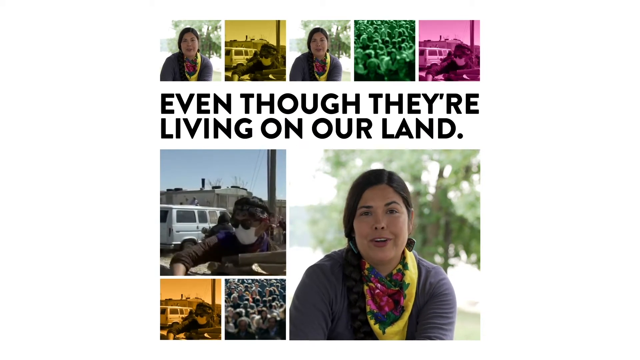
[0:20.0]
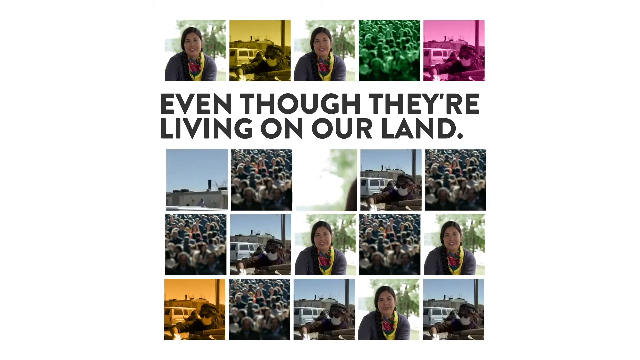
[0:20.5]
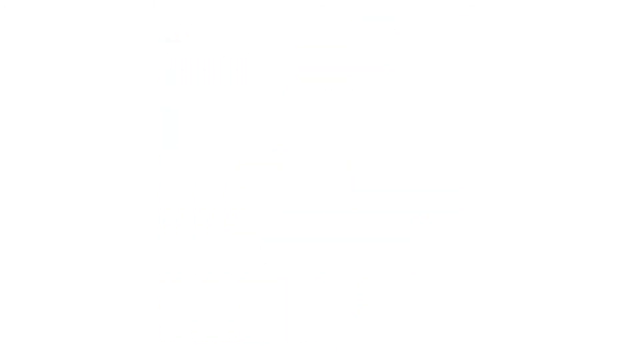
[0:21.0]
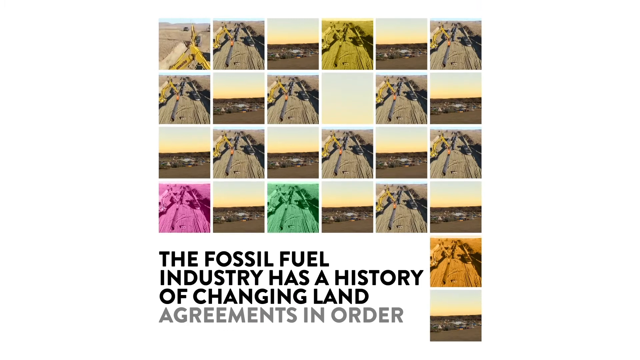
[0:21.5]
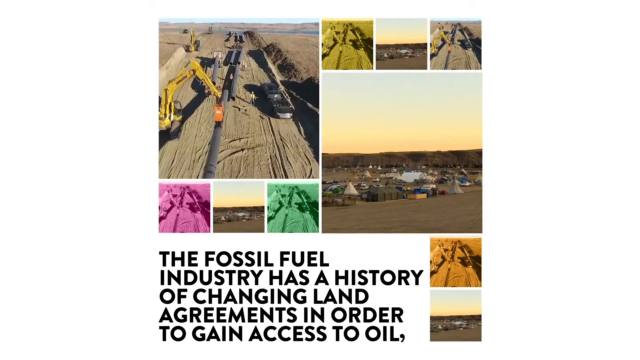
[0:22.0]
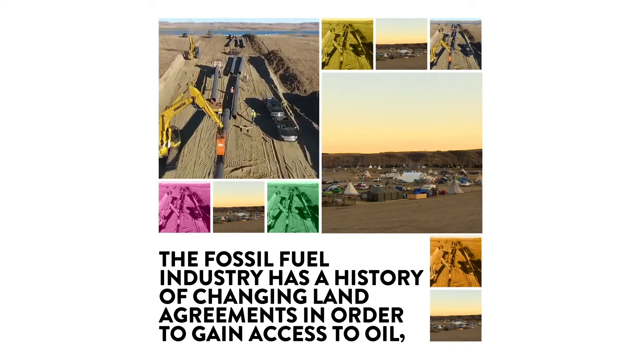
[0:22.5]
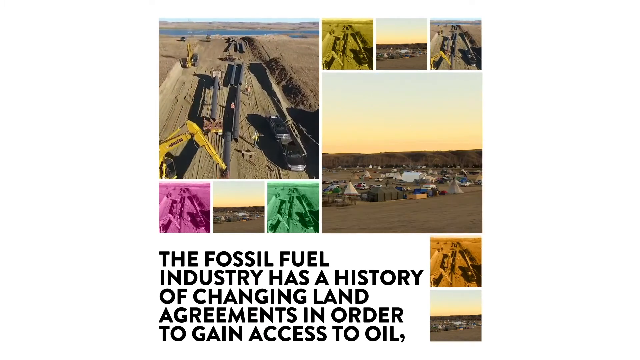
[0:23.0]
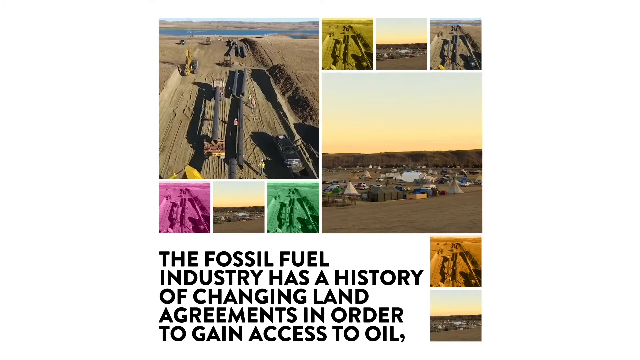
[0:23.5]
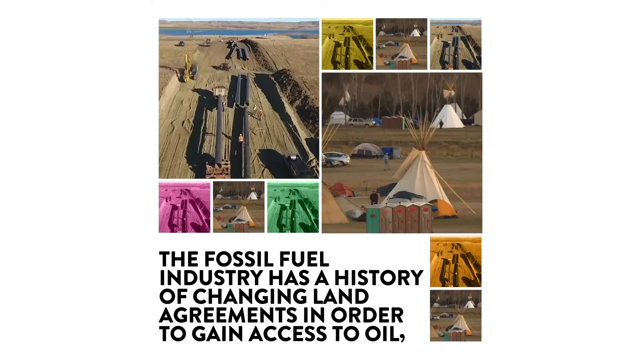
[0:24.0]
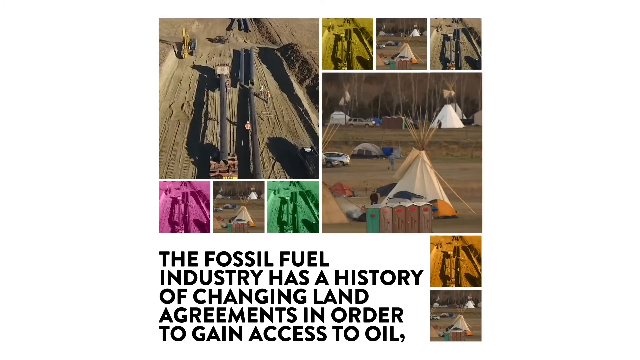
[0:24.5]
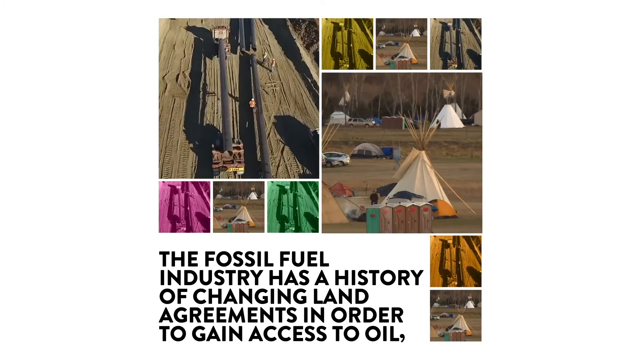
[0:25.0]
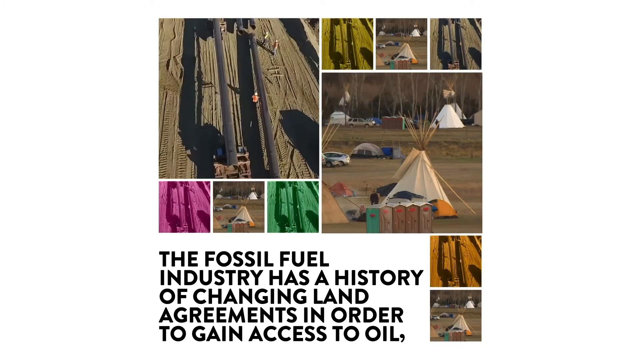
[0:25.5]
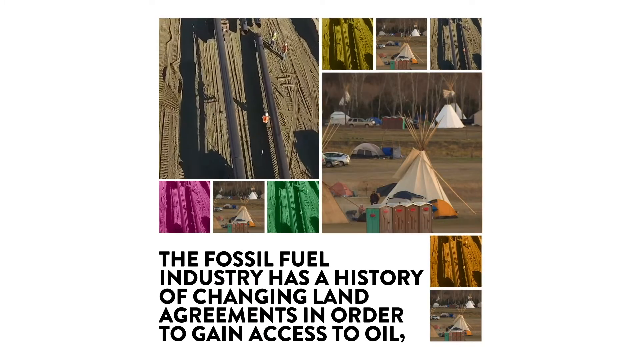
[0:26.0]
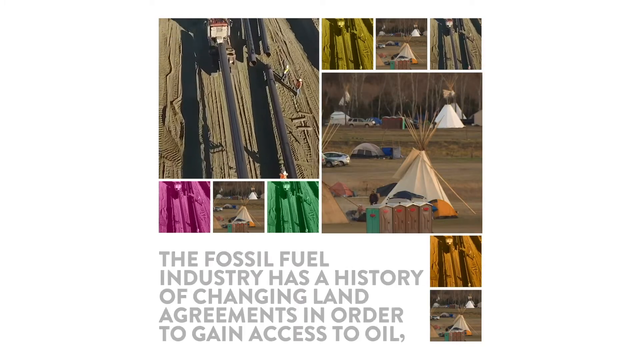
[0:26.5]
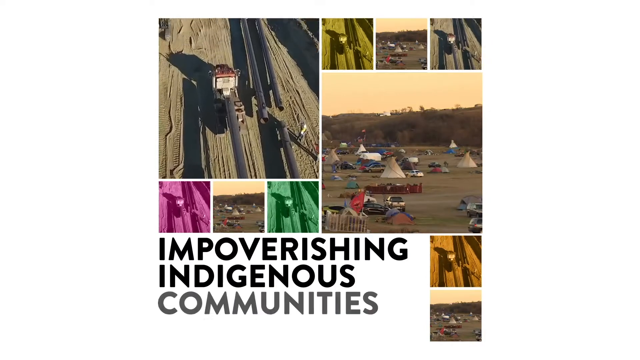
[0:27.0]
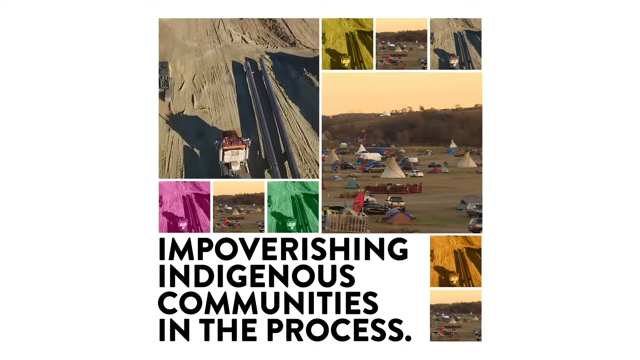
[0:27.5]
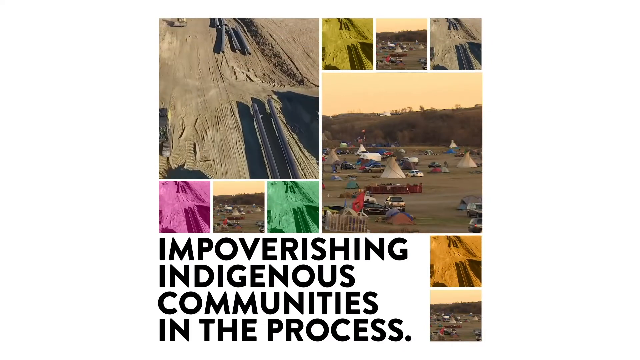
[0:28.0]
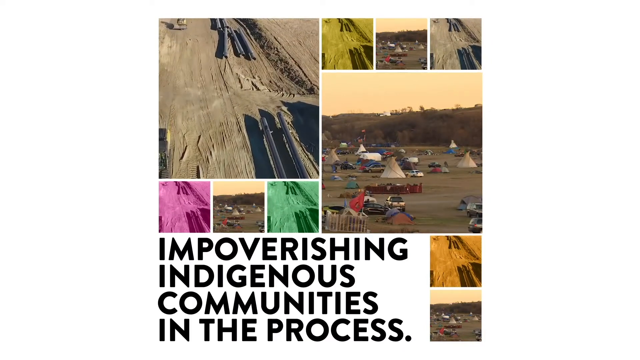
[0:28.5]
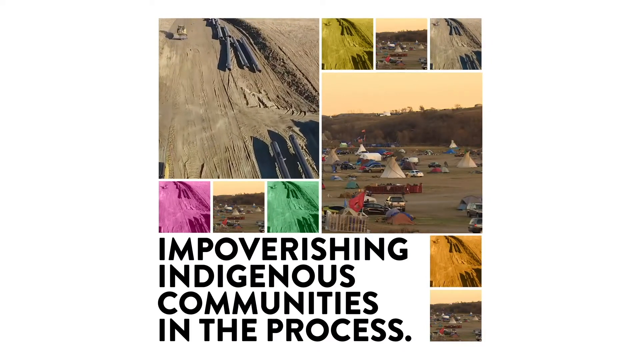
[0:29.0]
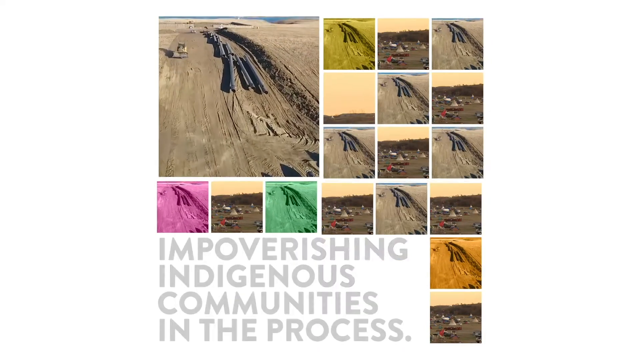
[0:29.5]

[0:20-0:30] Many videos show construction on the land. Workers appear to be drilling or running pipe through it. People are in teepees, and porta-potty outdoor restrooms stand among the teepees. The land appears to be flattened and pipes are being laid, with what looks like a river behind it.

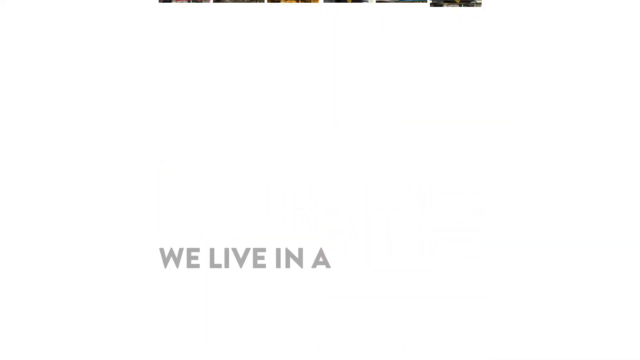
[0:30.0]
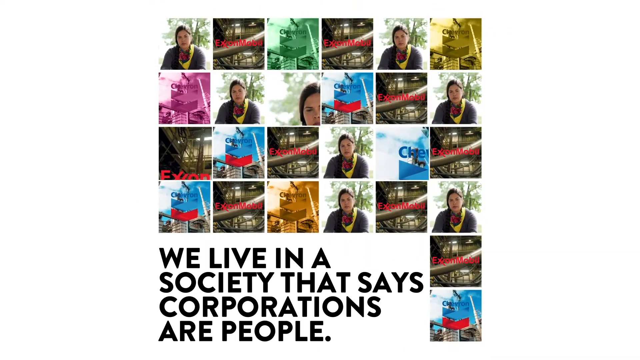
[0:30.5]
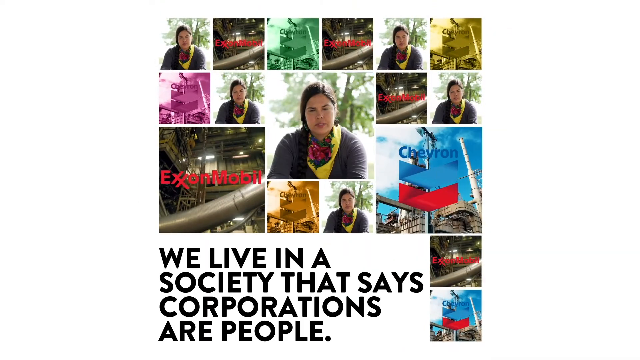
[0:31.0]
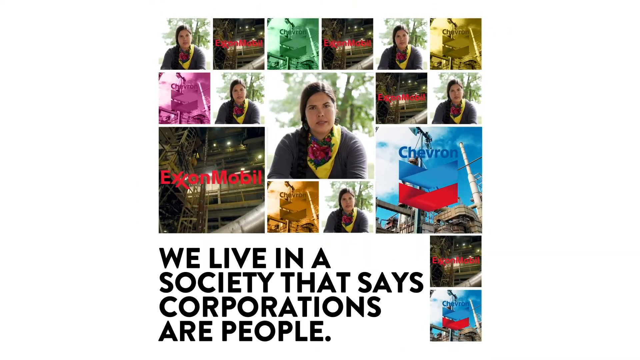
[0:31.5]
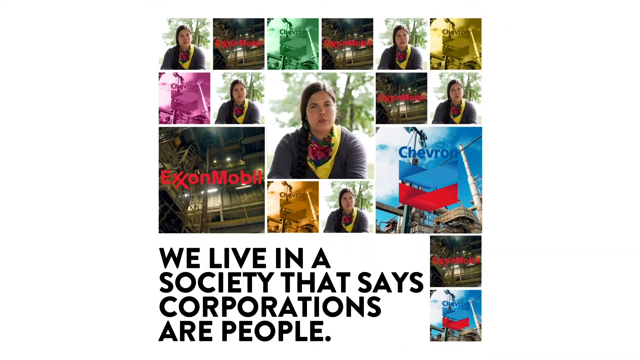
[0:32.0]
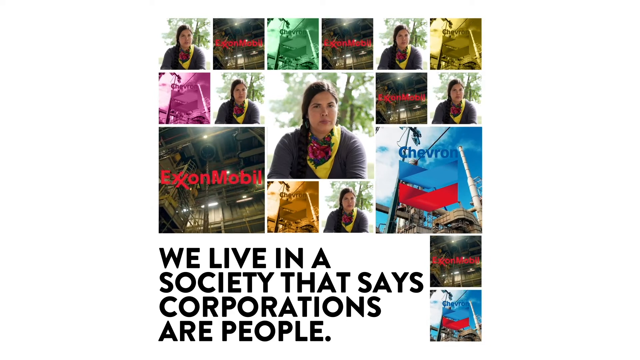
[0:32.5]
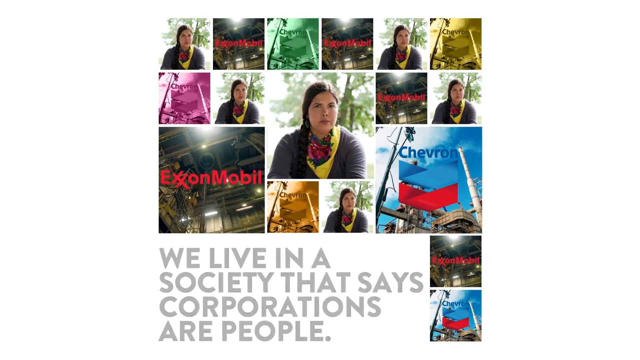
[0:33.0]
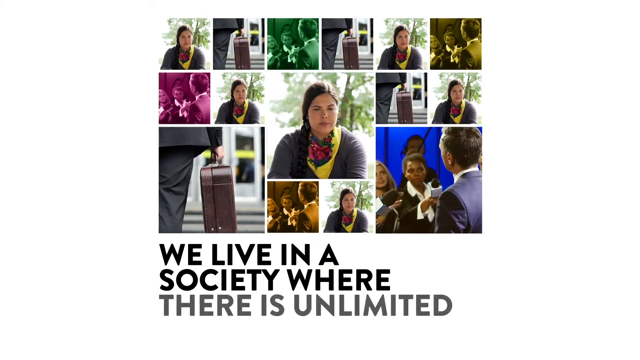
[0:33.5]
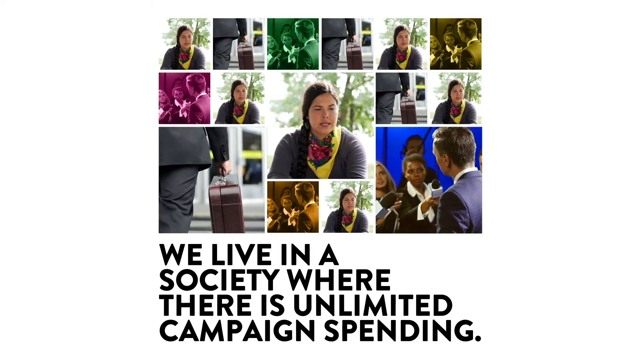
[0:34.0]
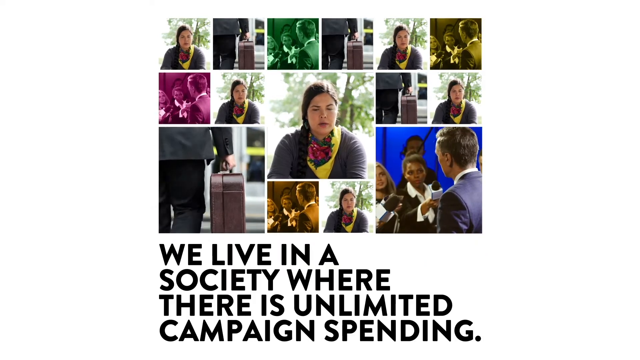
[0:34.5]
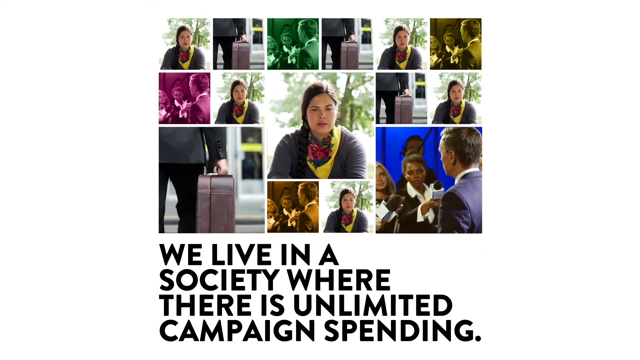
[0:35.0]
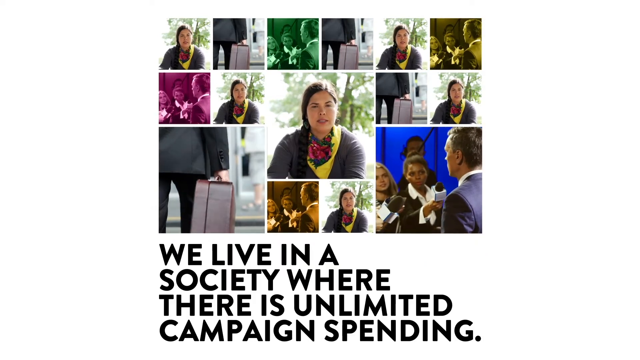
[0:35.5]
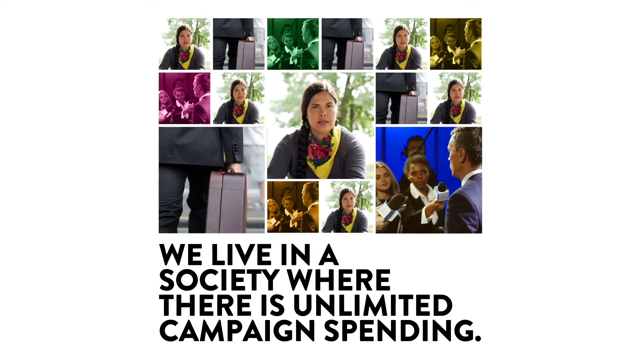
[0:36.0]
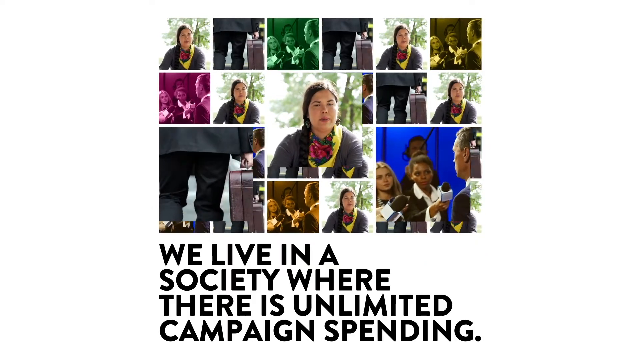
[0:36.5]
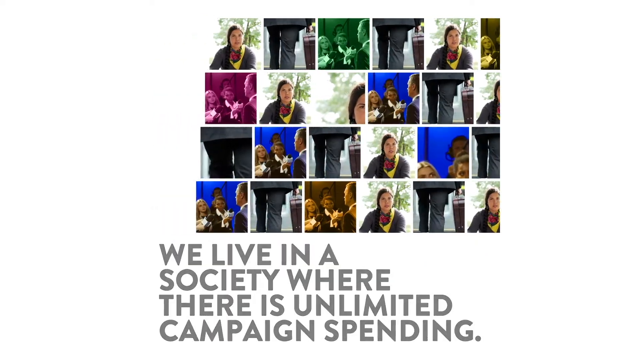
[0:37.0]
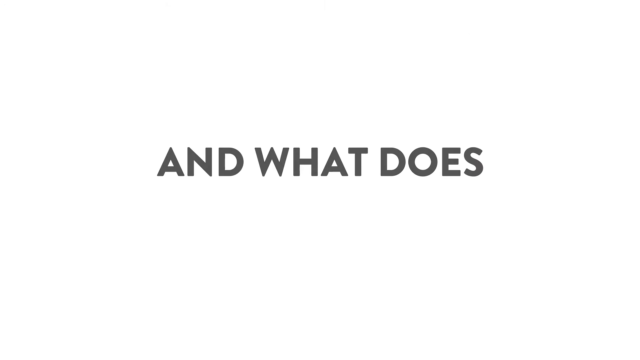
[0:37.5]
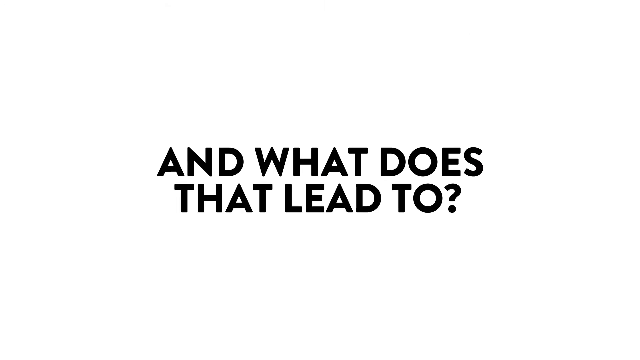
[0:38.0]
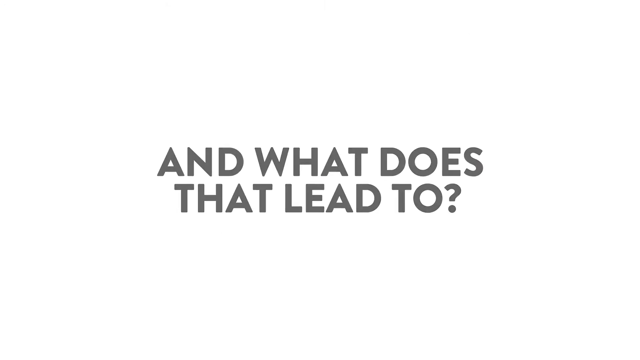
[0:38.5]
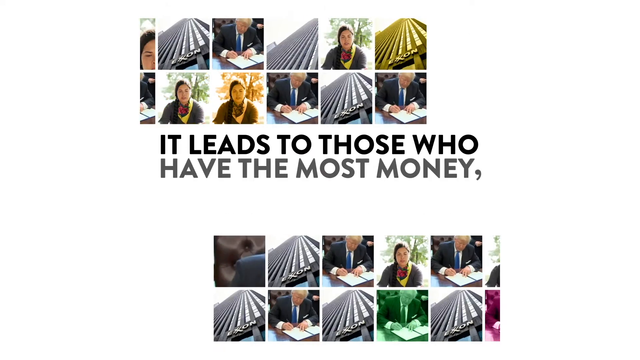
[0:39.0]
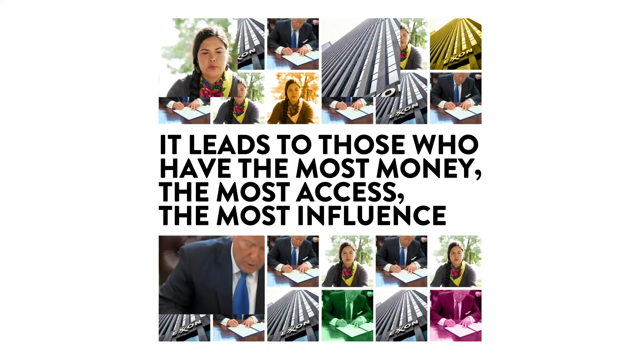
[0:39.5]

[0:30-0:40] The focus turns to corporations: Exxon is shown on screen, and Chevron appears as well. Interviews with people are shown. Lower on the screen, someone signs a bill; it possibly resembles President Trump, but the shot is too fast to tell who it is. Many different screens are shown at once.